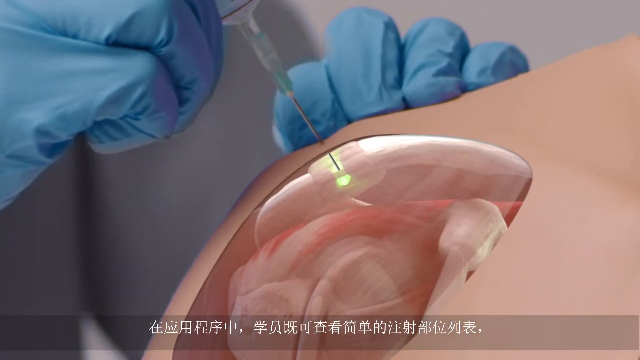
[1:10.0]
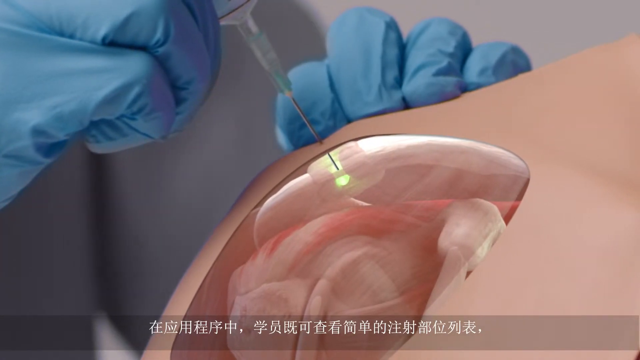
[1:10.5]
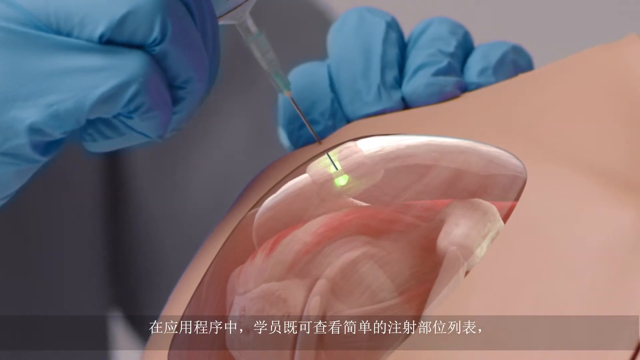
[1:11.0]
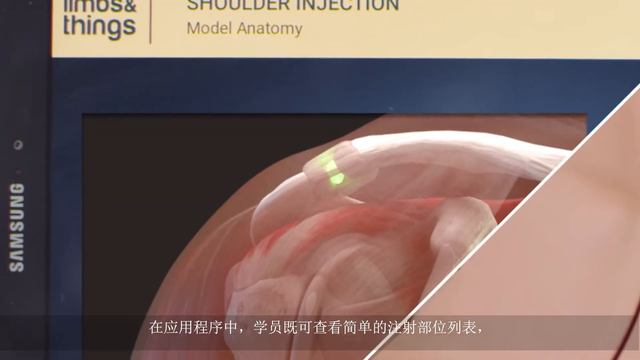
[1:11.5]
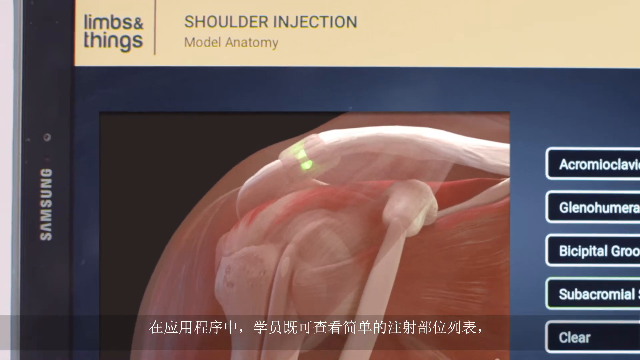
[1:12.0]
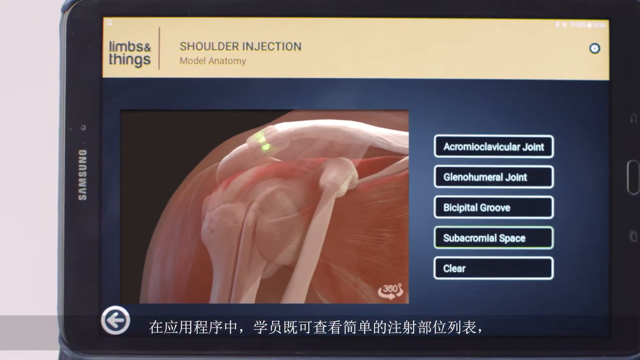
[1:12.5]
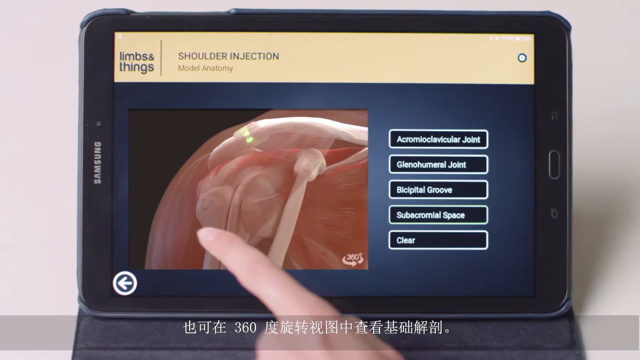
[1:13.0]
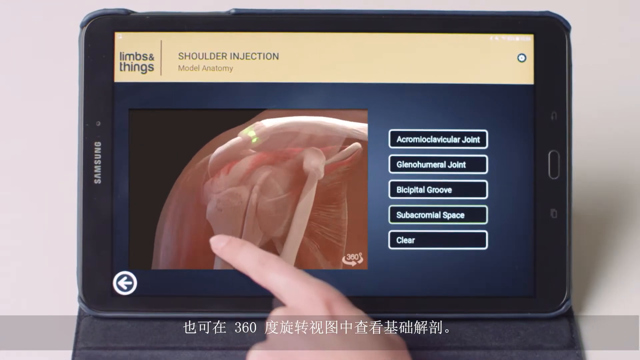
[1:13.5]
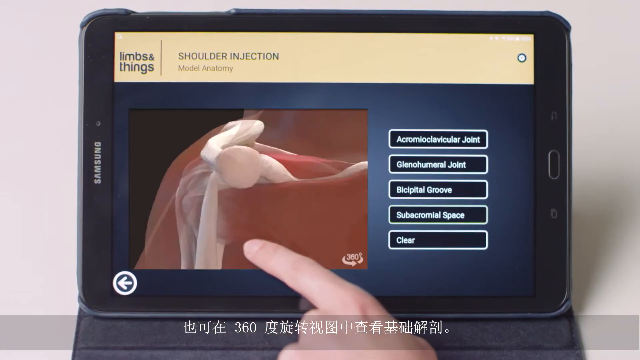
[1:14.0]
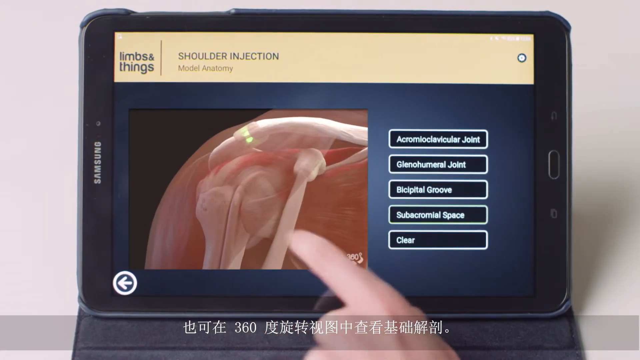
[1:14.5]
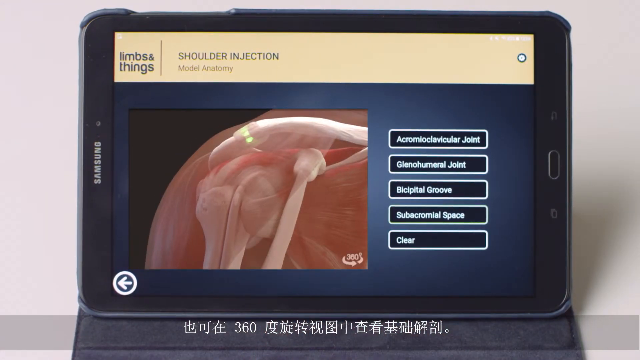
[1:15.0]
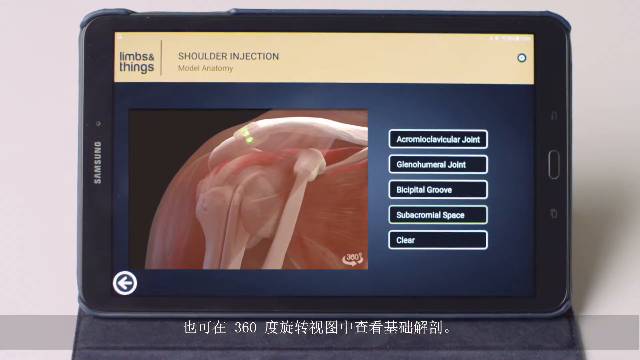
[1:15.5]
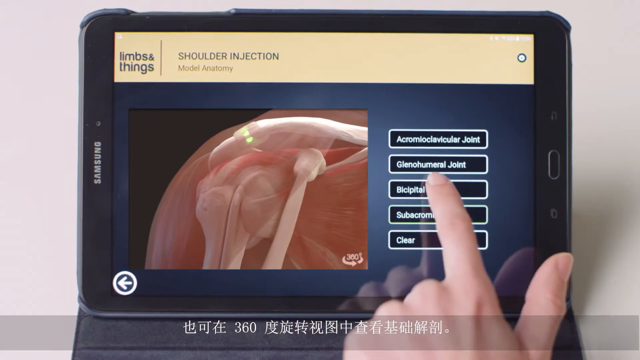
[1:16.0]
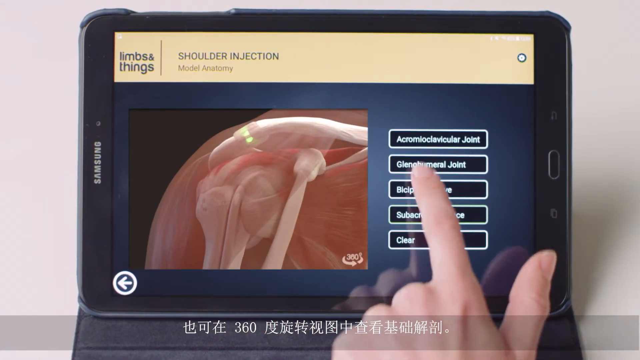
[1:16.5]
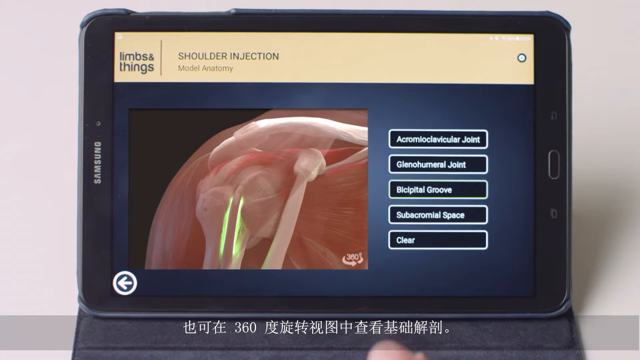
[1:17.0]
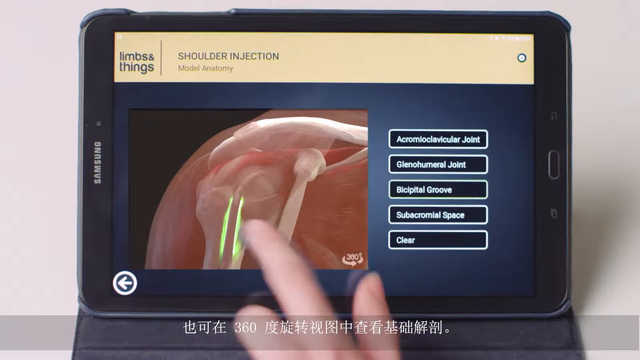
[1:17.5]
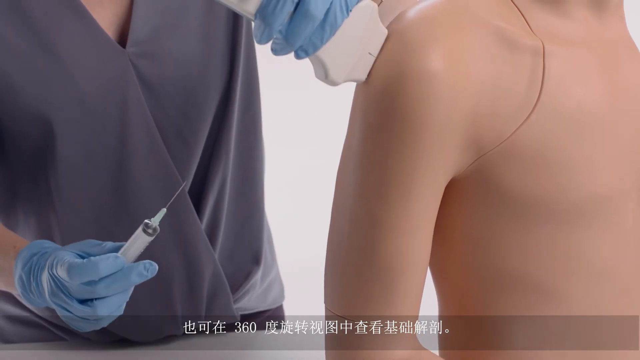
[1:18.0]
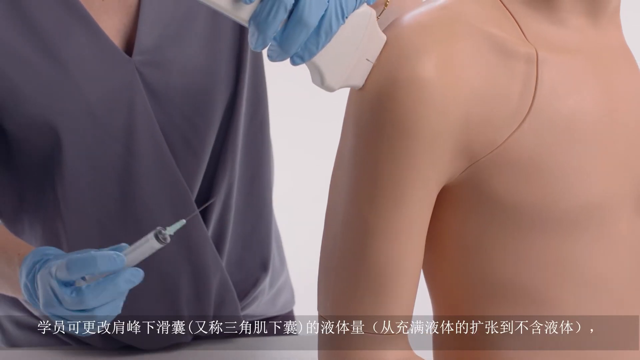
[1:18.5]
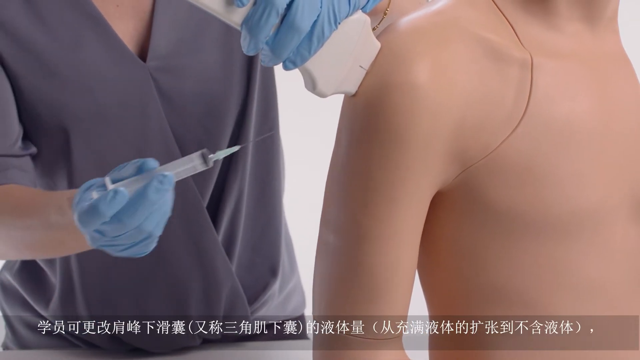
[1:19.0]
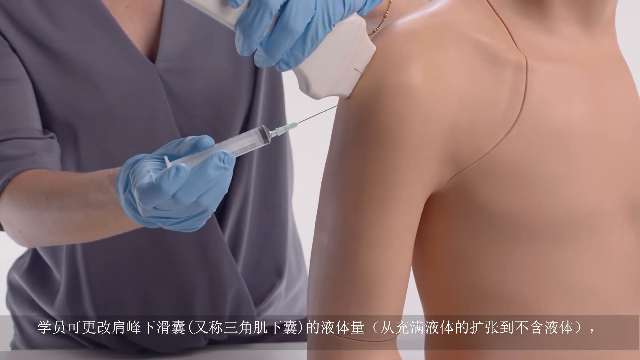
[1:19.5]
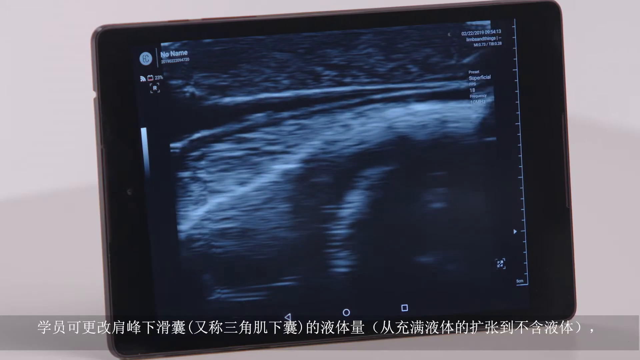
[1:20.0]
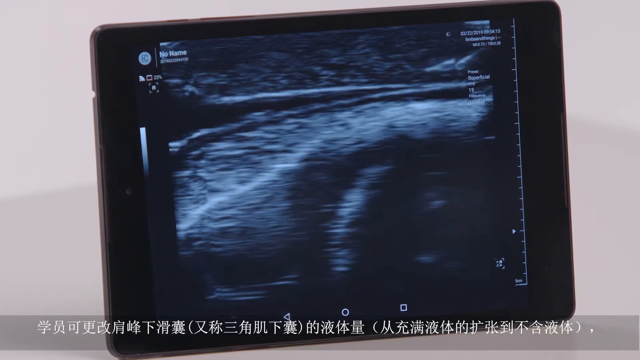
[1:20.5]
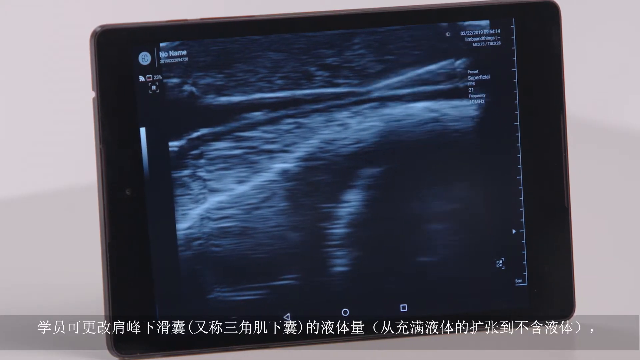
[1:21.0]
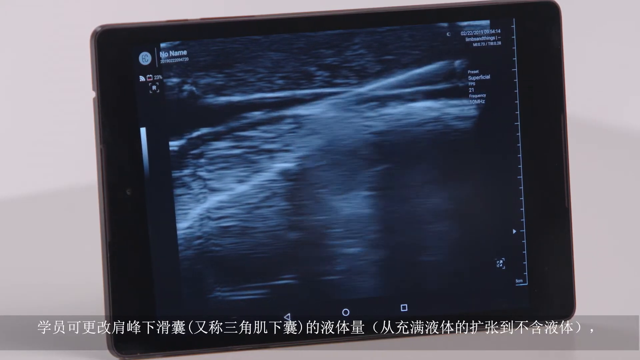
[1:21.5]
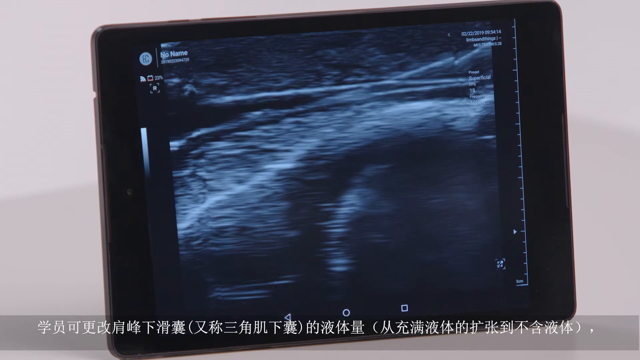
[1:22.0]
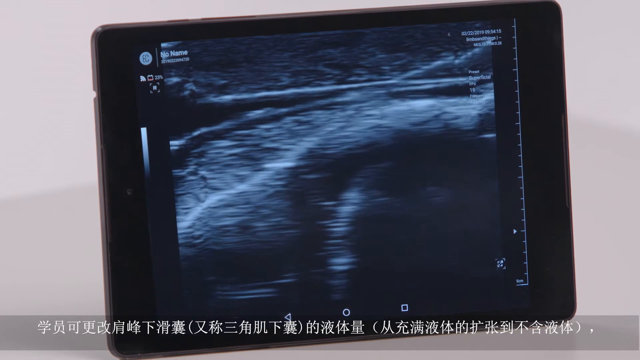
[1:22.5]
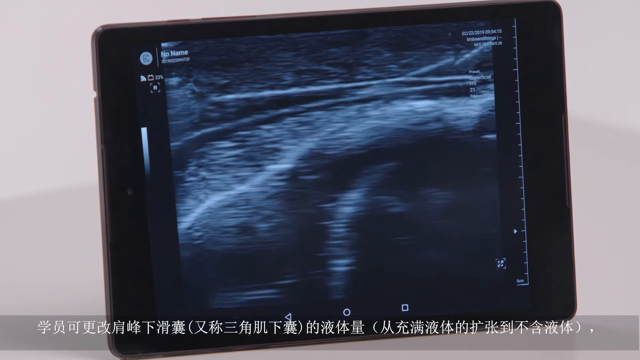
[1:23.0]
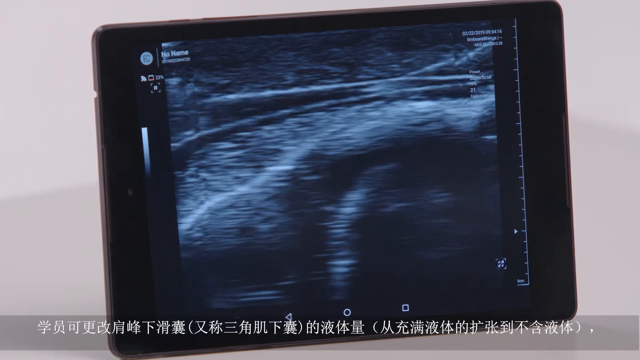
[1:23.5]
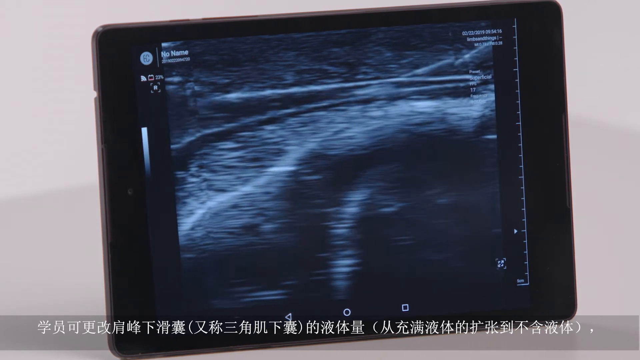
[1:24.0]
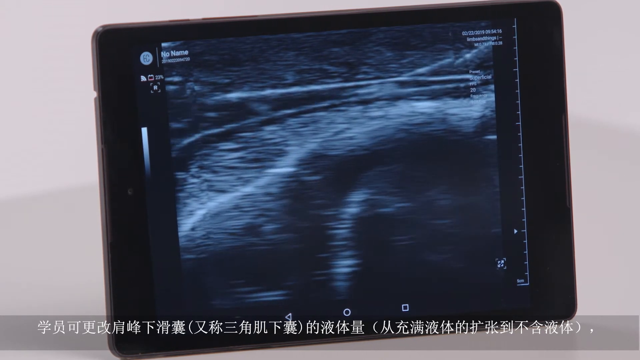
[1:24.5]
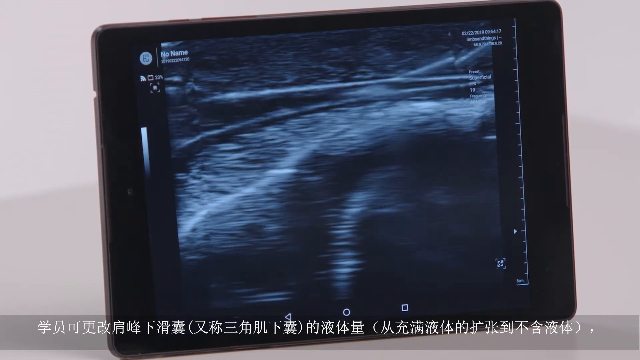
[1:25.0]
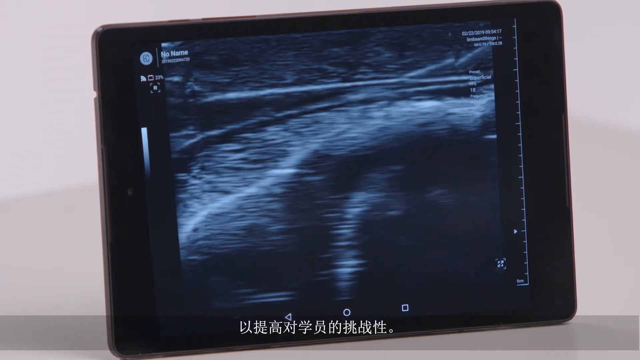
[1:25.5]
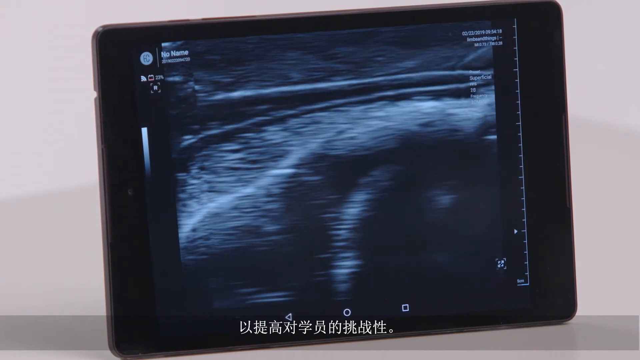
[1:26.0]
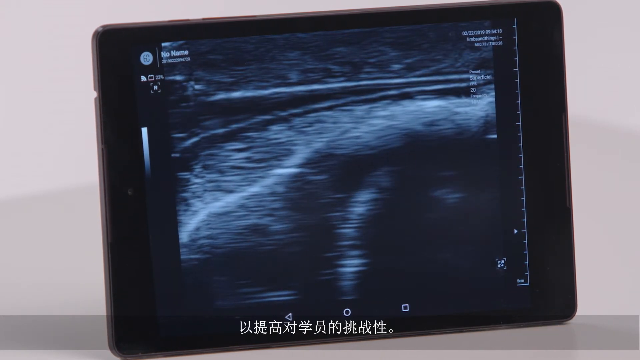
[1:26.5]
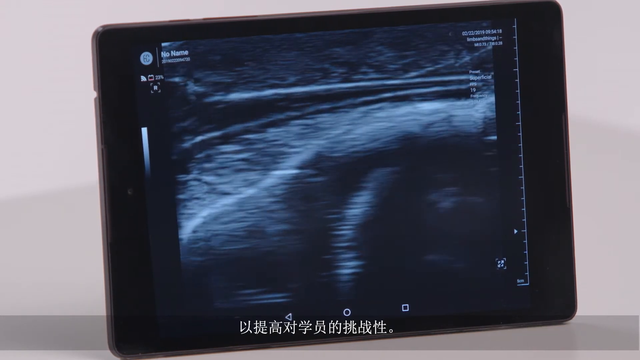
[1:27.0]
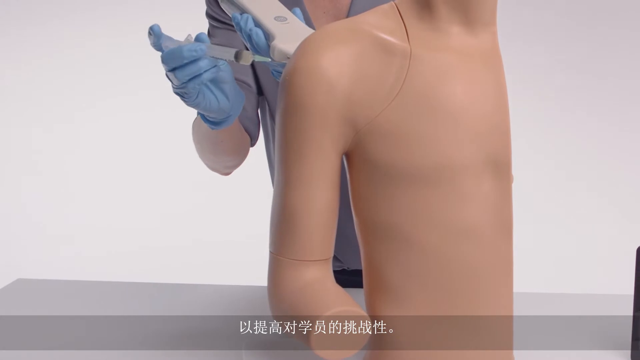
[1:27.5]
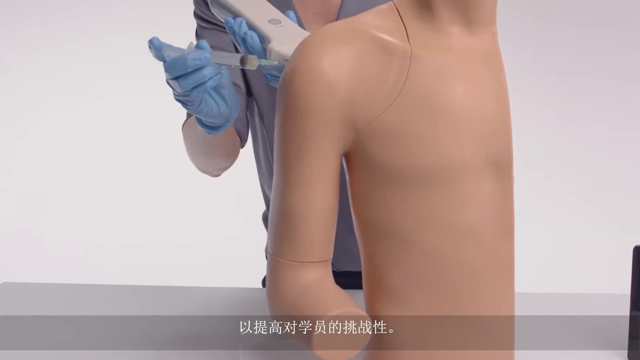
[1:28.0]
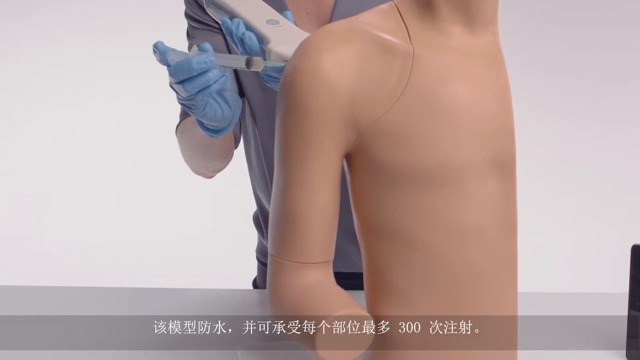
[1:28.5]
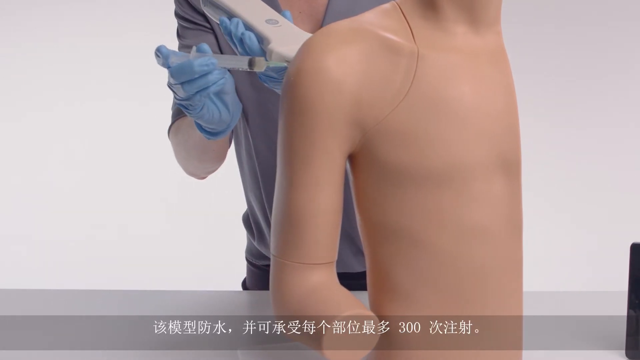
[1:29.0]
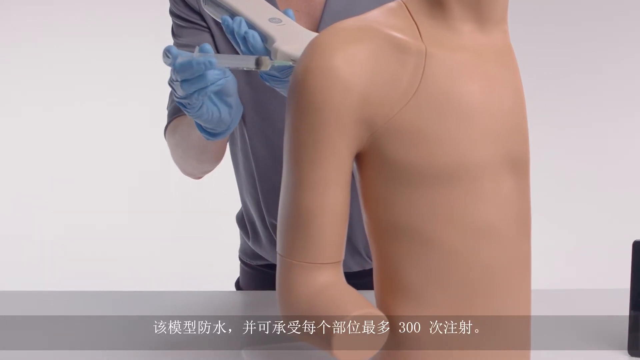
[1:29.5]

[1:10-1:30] The screen of the iPad, a Samsung, shows "limbs and things" with the heading "shoulder injection model anatomy". The view zooms out to show the nurse pointing with her finger. On the right-hand side are various headings with buttons for the various parts of the shoulder; as she presses an area on the screen with her finger, that section of the shoulder is highlighted. The image then changes to the nurse with the needle and syringe in her right hand and the scanner against the dummy's shoulder, wearing blue surgical gloves. She inserts the needle into the dummy and gives it an injection, and the iPad screen shows exactly where the liquid is flowing into the dummy's flesh.